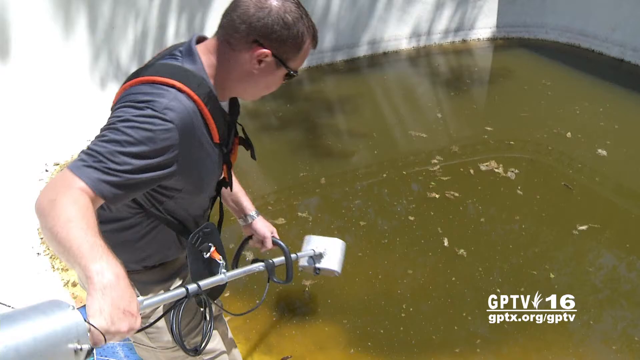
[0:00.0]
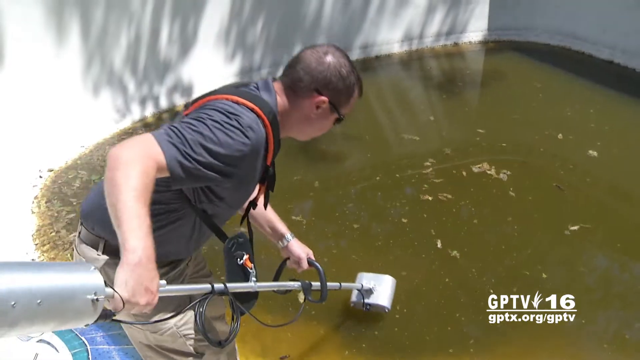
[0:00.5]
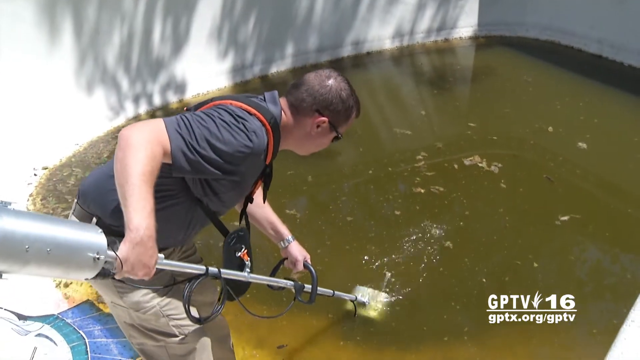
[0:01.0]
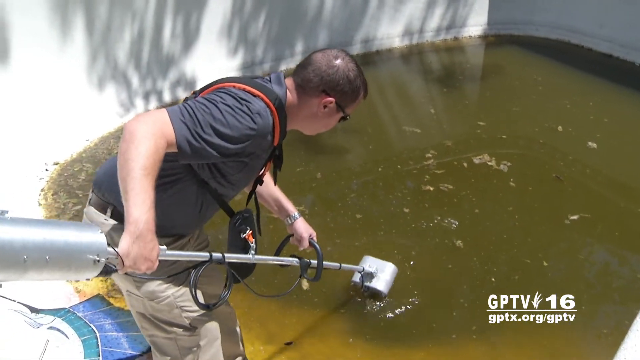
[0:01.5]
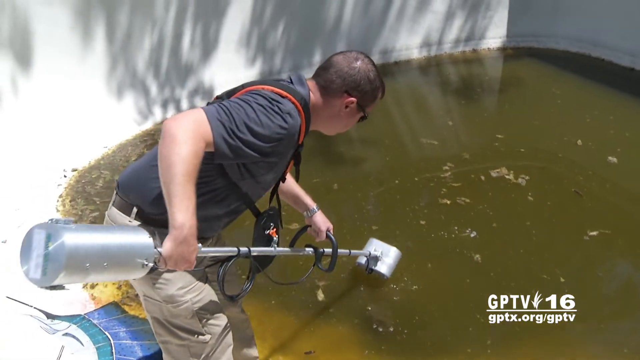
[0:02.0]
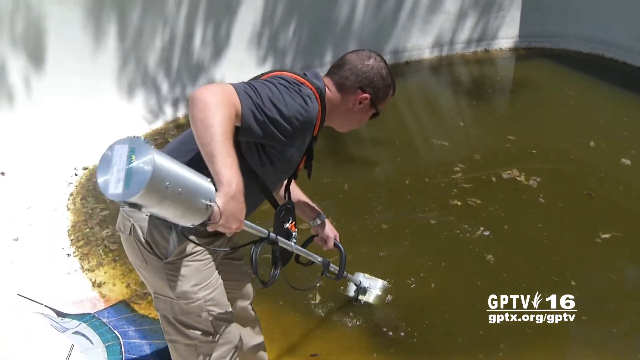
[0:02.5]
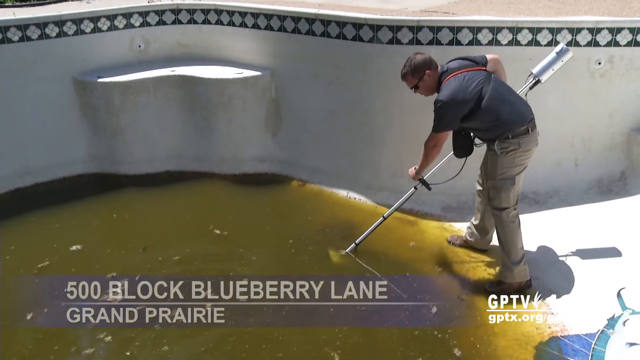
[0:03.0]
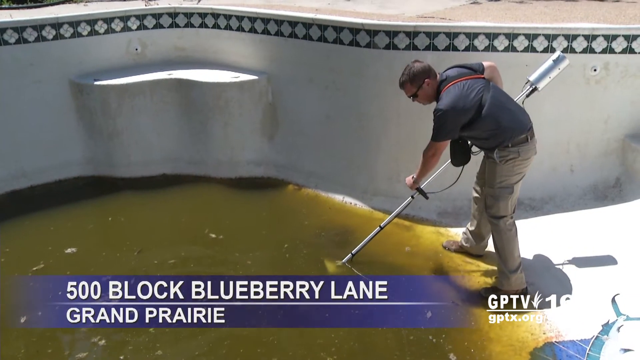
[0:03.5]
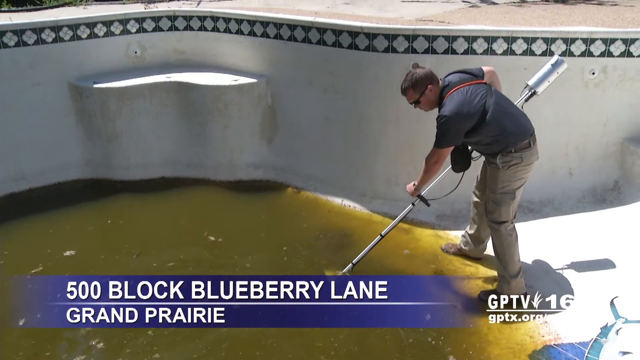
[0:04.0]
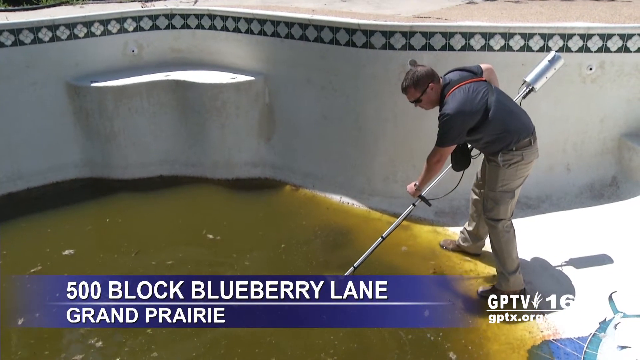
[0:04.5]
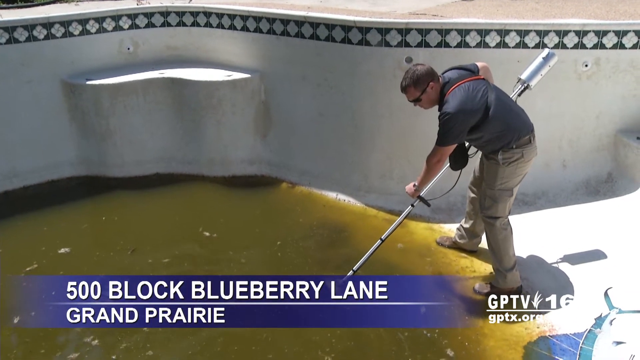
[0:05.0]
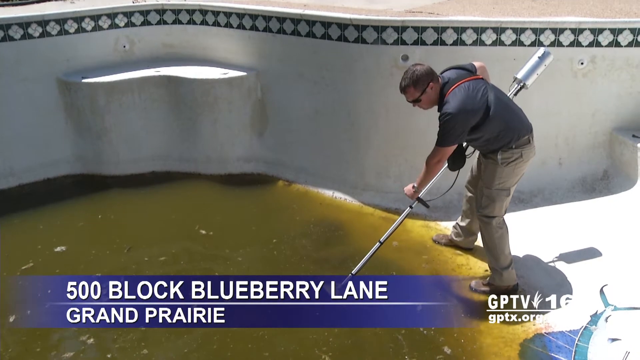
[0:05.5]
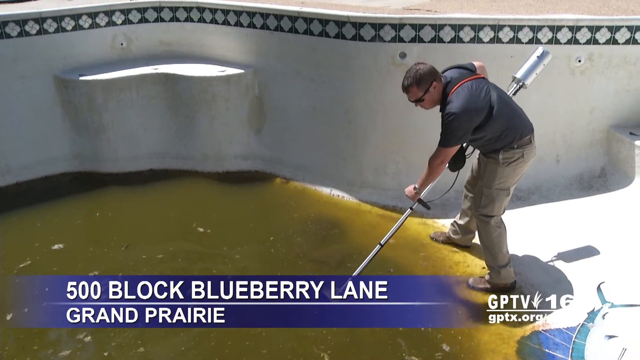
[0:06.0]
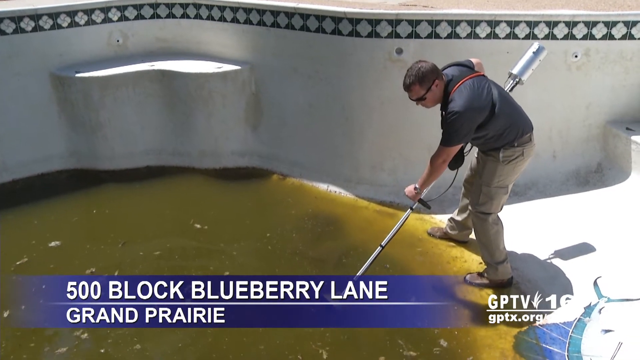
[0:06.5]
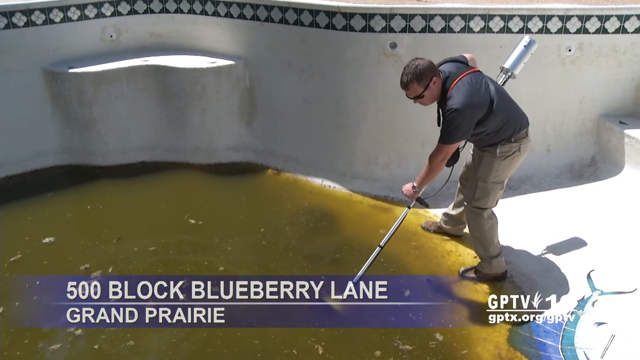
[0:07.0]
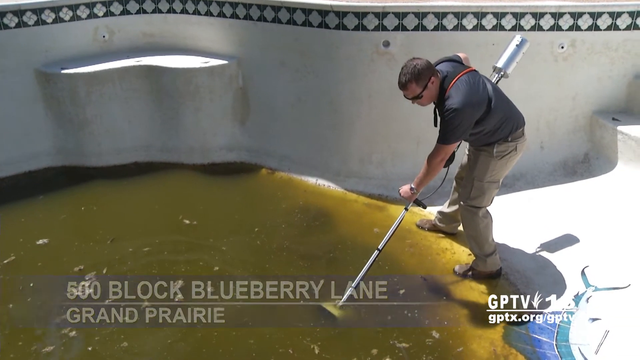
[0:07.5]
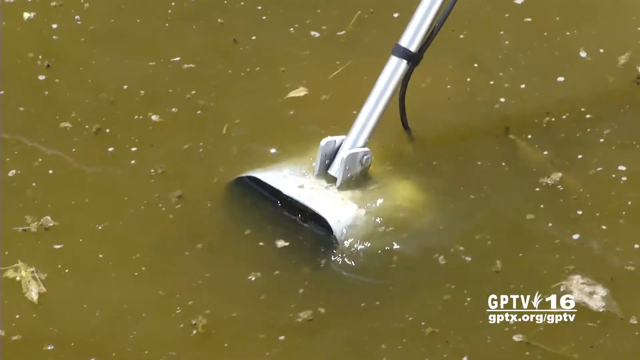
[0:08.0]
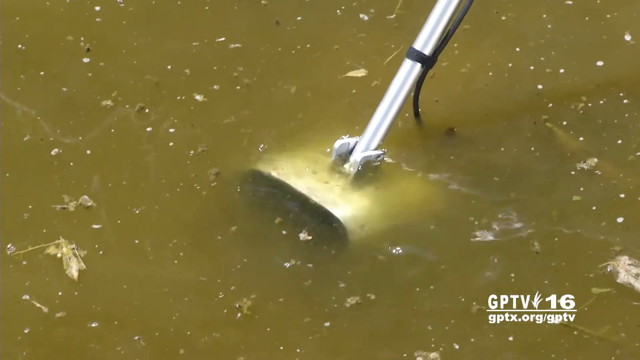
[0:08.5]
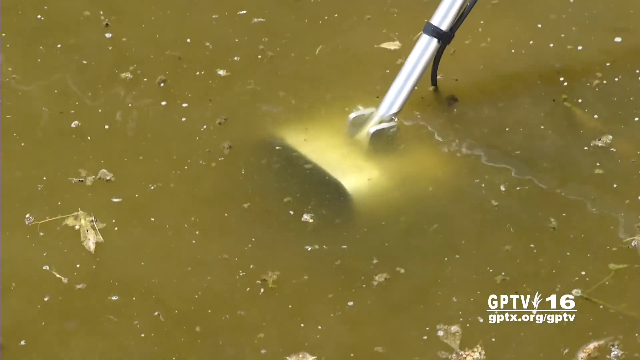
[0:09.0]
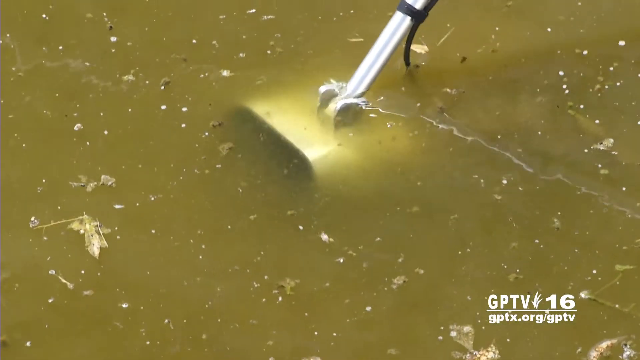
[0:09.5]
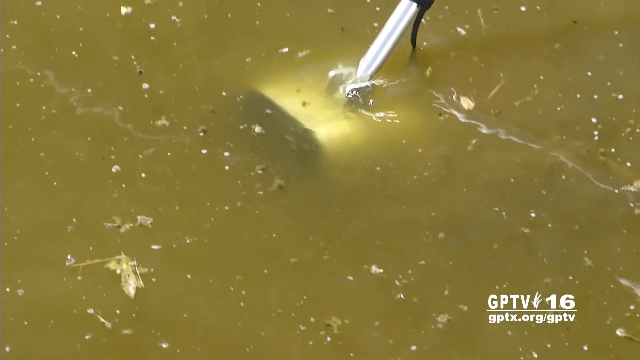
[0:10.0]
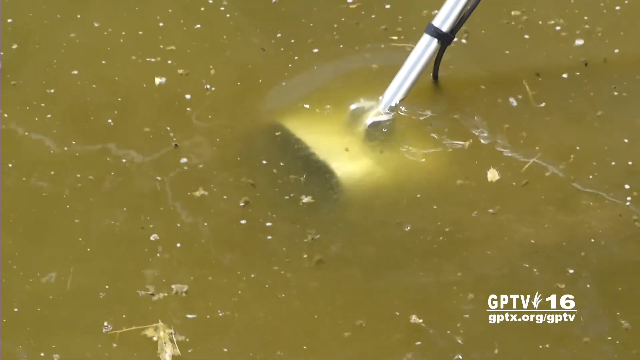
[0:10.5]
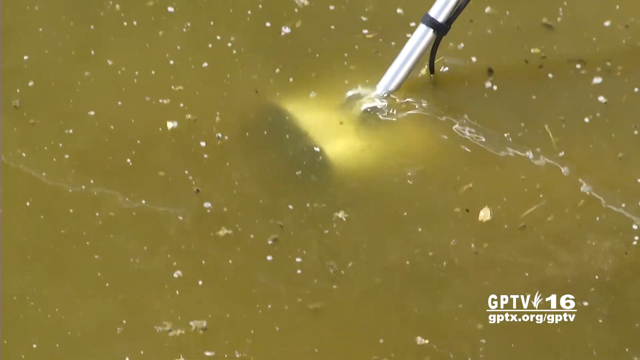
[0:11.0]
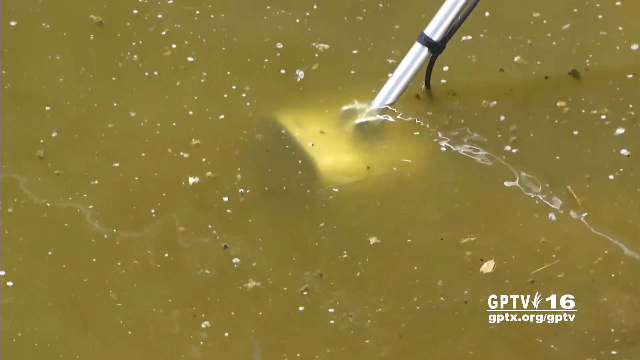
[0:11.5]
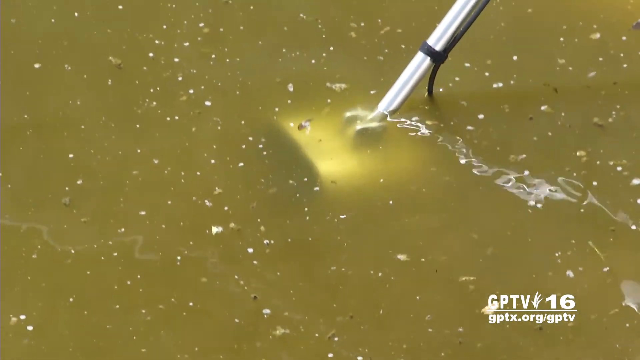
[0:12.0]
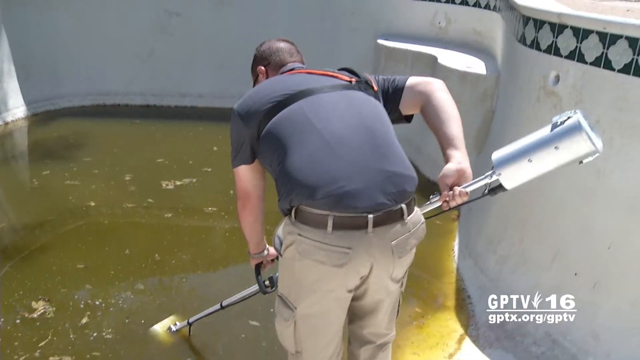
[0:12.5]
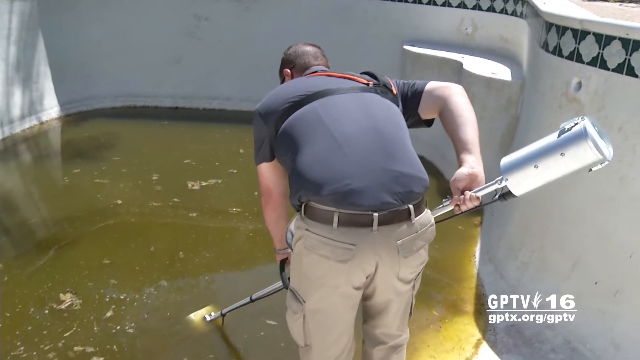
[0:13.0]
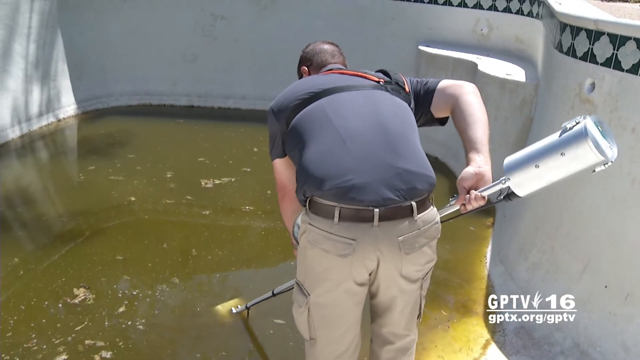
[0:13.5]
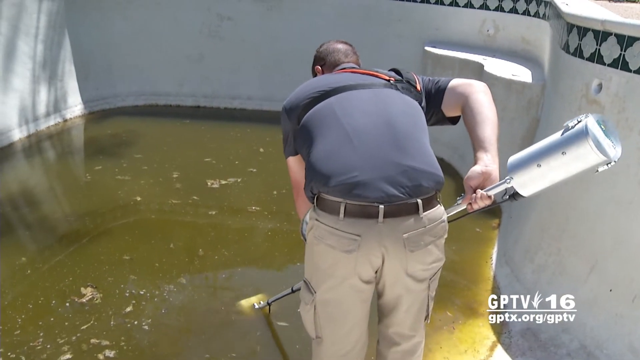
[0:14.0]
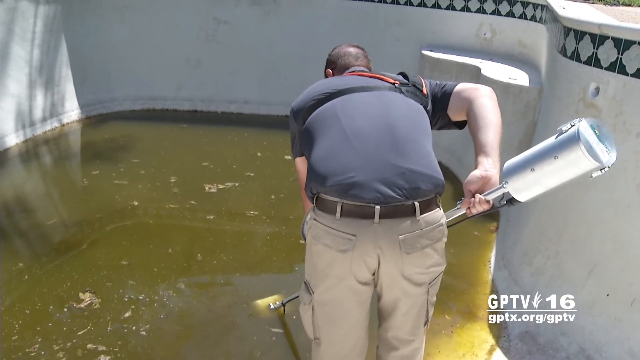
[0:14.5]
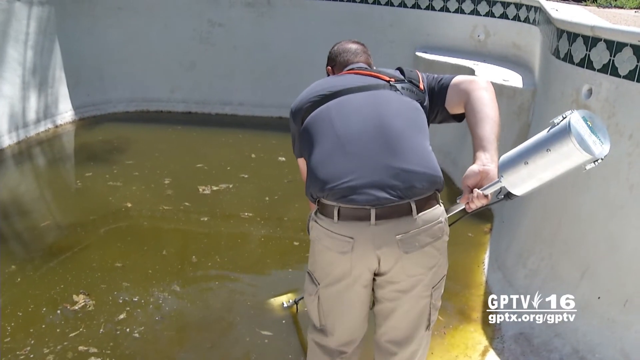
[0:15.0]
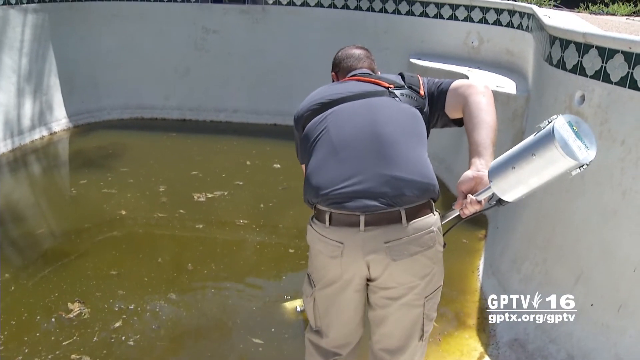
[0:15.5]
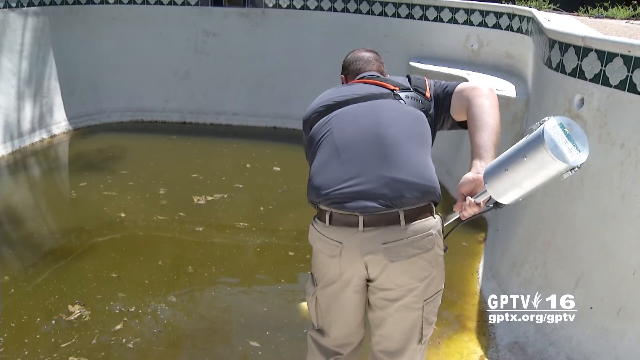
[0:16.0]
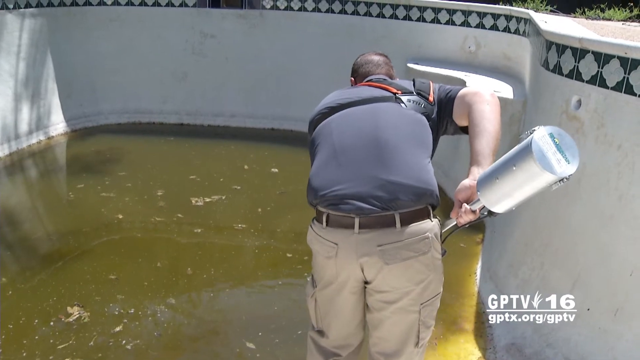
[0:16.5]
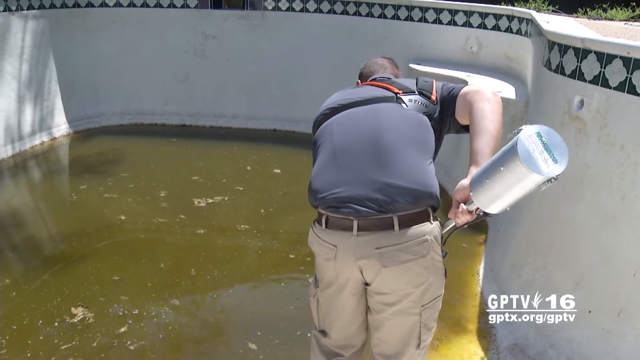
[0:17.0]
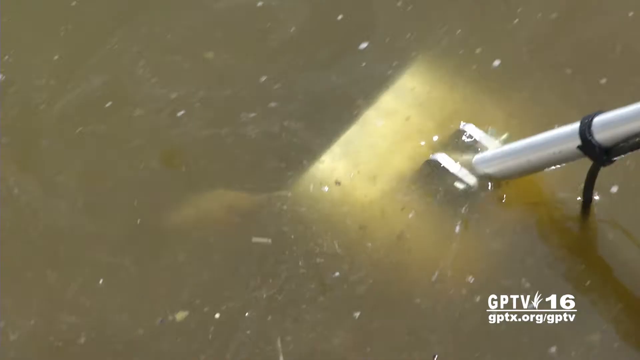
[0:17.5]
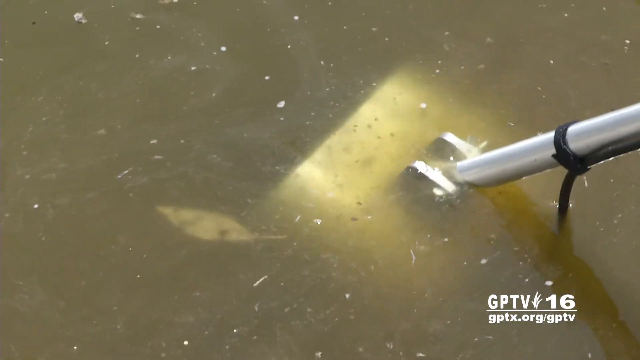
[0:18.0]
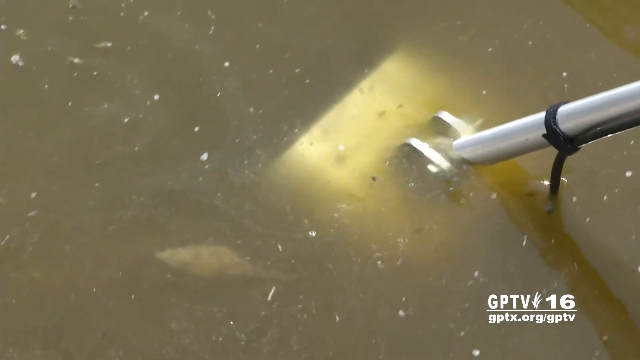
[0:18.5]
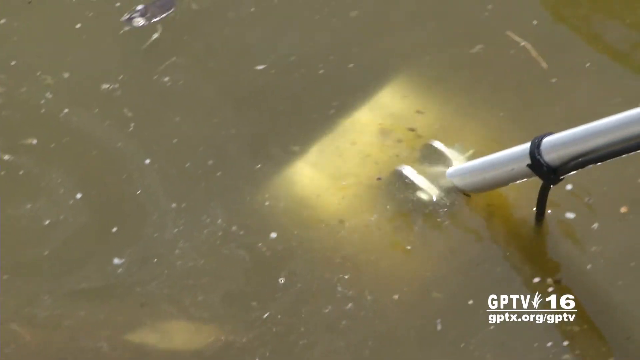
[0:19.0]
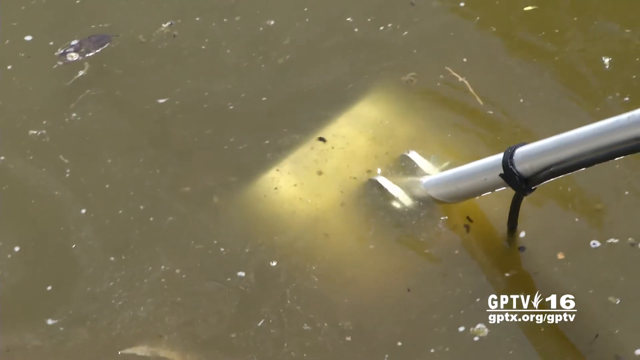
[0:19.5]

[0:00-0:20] A man on the right side of the screen, wearing a gray polo and khaki pants, holds a metal cylindrical object with a black handle. His left hand holds the black handle and his right hand holds the back of the metal pole. He places the large box-like end of the pole into a large swimming pool full of green stagnant water with multiple pieces of detritus floating on it, and slowly dunks the pole into the pool multiple times. The camera angle changes to the other side of him as he continues to dunk the device into the pool. Text at the bottom reads "500 block Blueberry Lane Grand Prairie". He slowly moves the box of the device from his right to his left inside the pool, and it seems to glide slowly through the green stagnant water. The camera changes to an angle behind the man, then cuts to a close-up of the metal box at the end of the pole he is controlling.